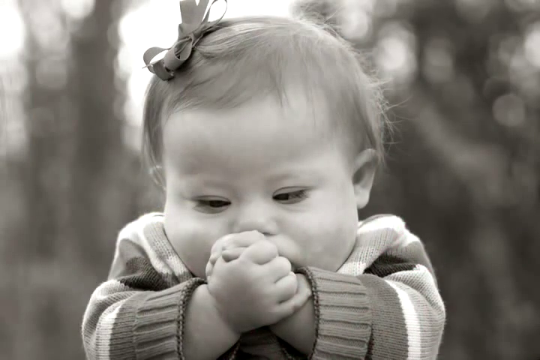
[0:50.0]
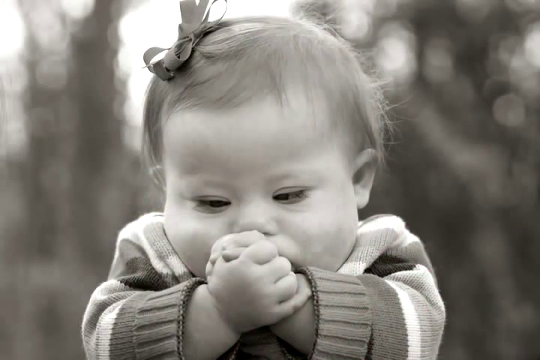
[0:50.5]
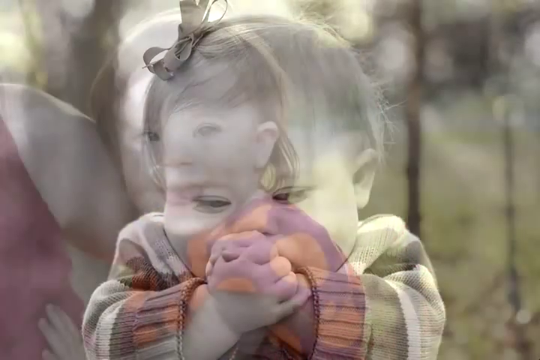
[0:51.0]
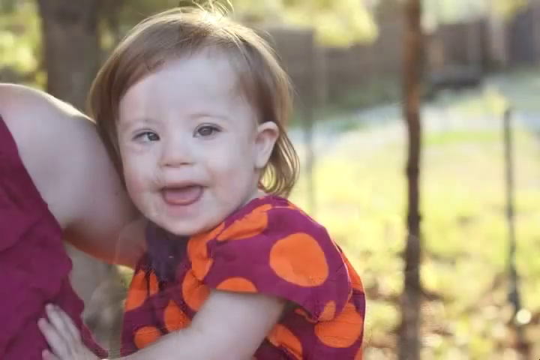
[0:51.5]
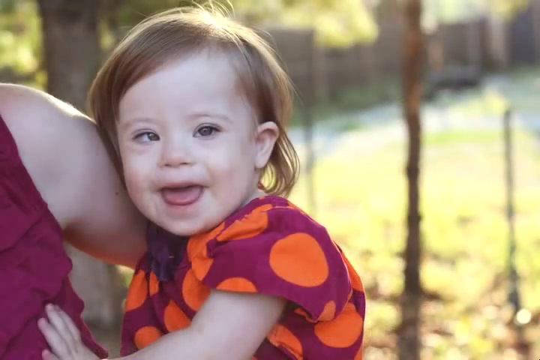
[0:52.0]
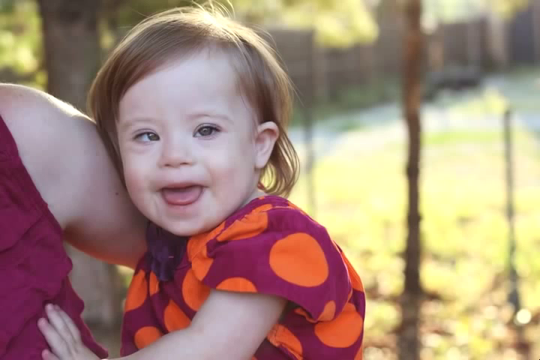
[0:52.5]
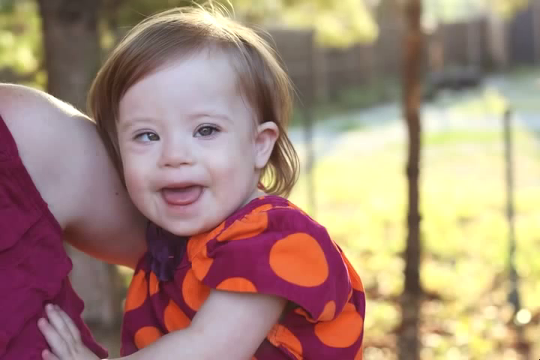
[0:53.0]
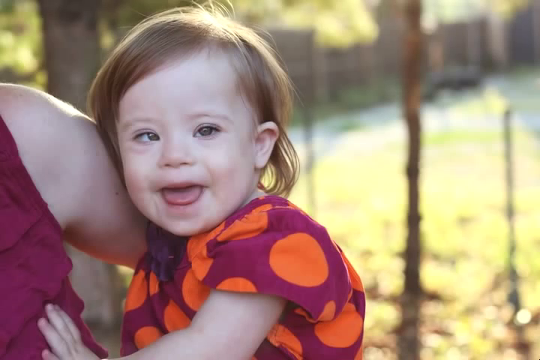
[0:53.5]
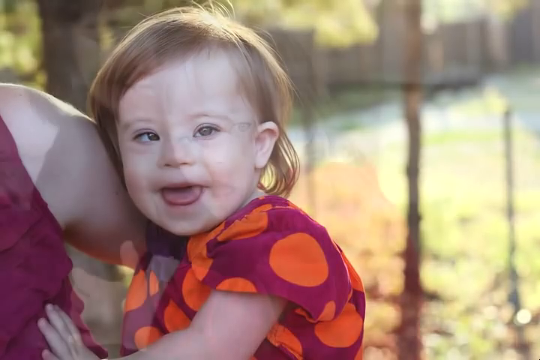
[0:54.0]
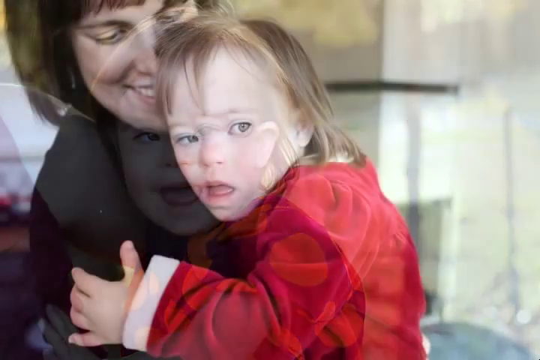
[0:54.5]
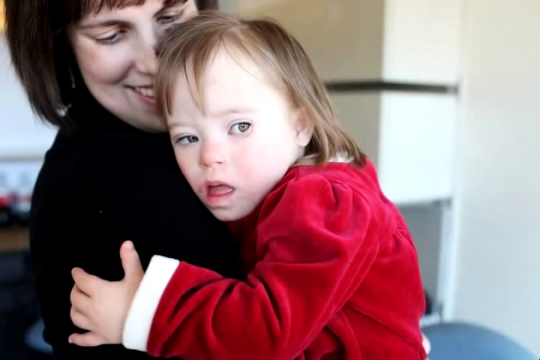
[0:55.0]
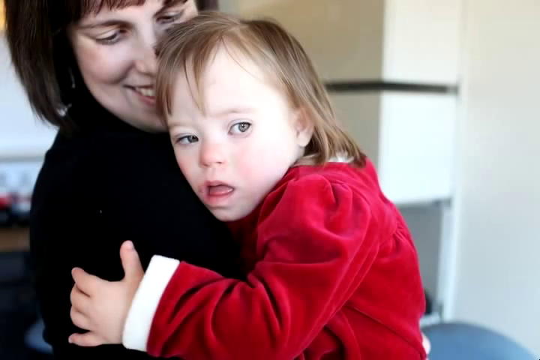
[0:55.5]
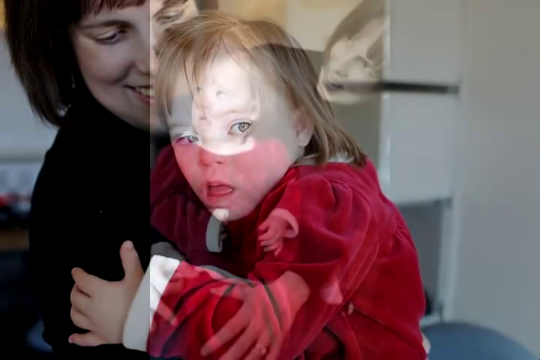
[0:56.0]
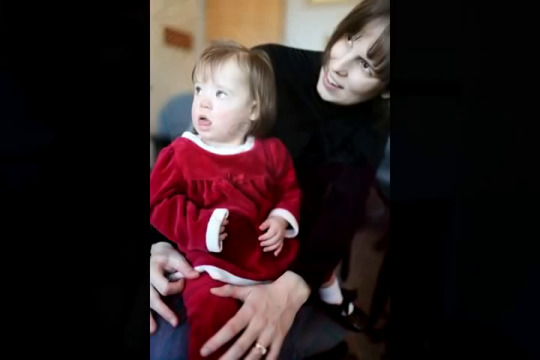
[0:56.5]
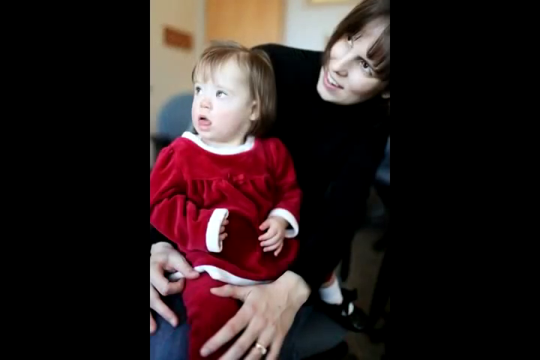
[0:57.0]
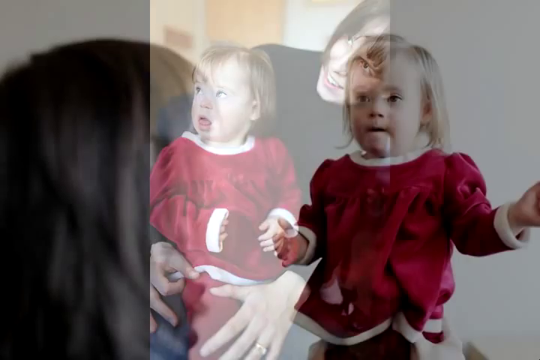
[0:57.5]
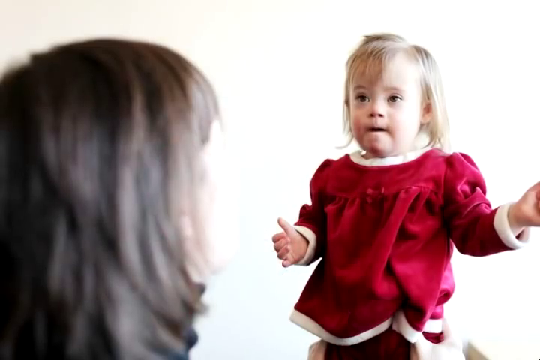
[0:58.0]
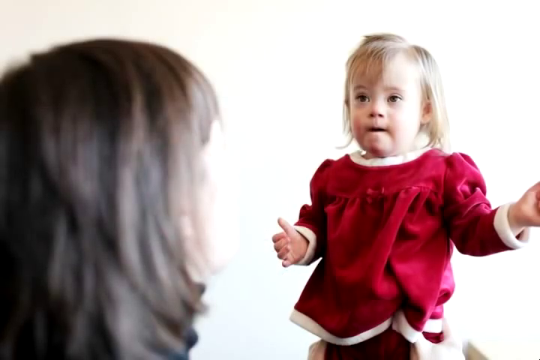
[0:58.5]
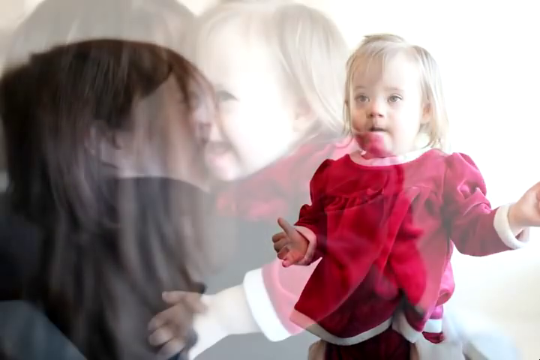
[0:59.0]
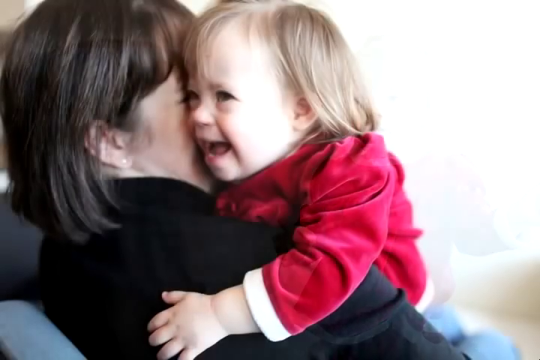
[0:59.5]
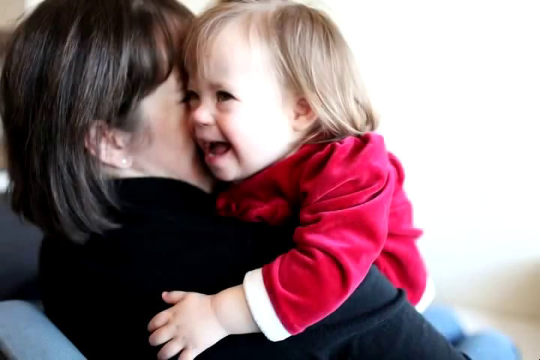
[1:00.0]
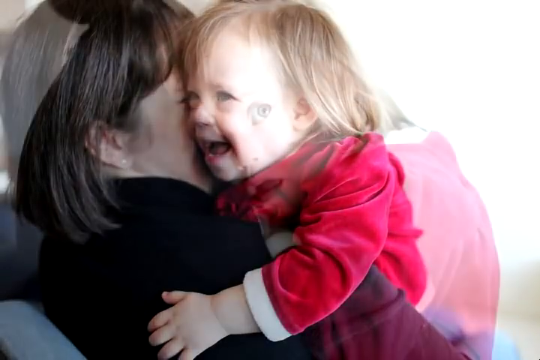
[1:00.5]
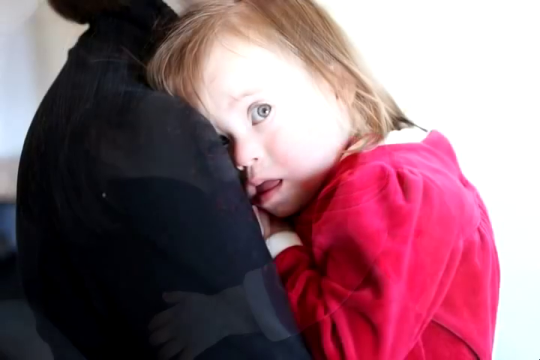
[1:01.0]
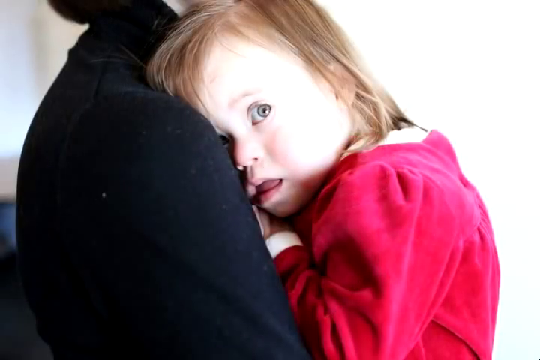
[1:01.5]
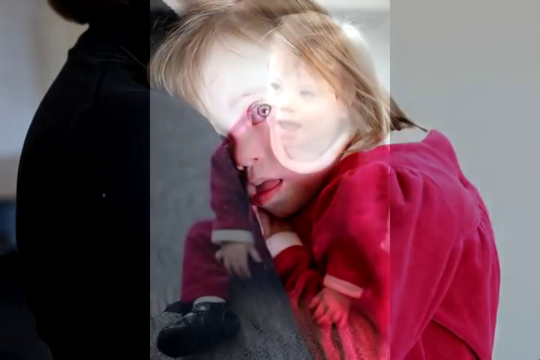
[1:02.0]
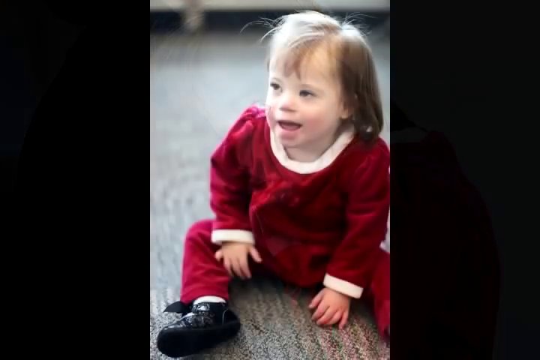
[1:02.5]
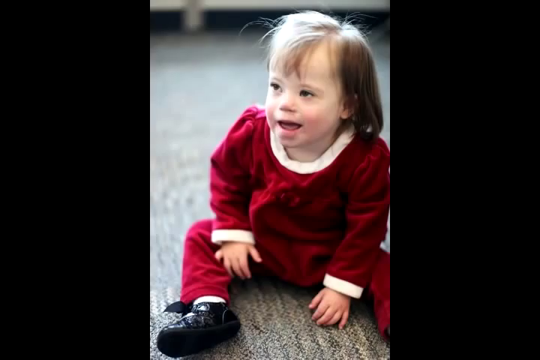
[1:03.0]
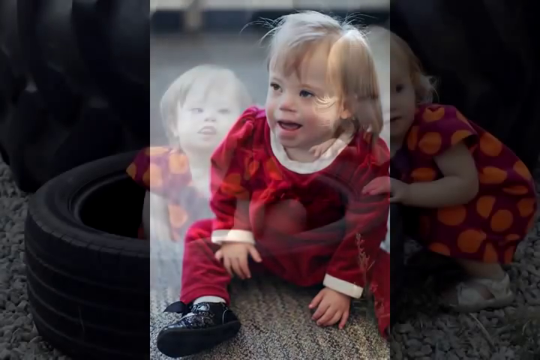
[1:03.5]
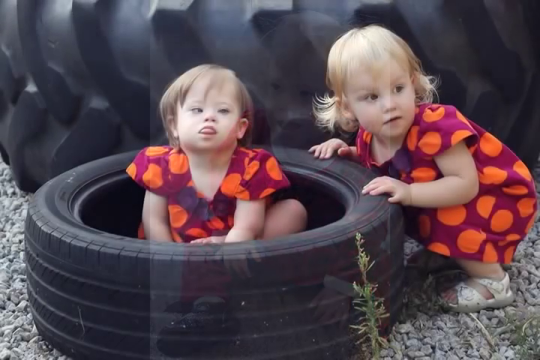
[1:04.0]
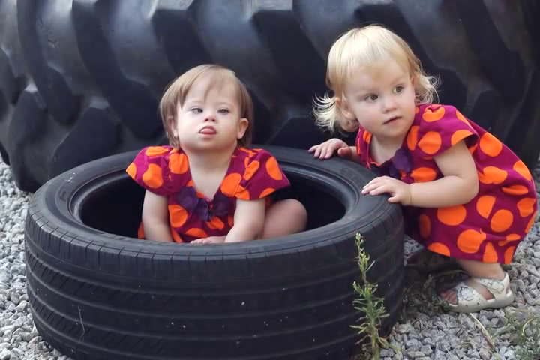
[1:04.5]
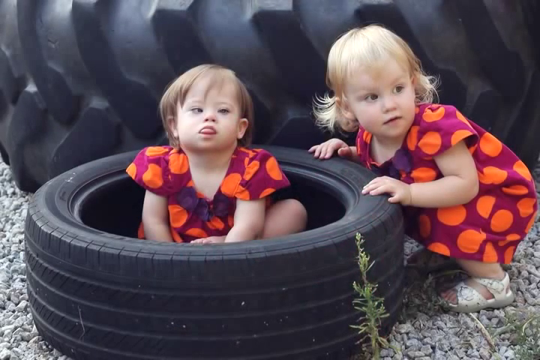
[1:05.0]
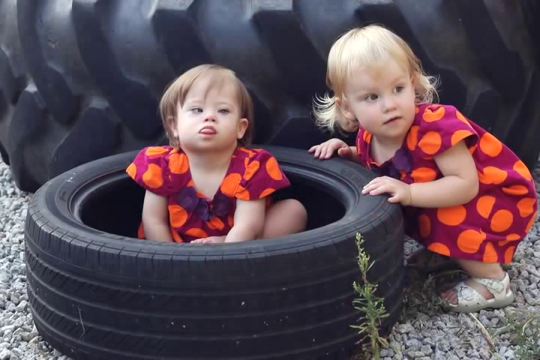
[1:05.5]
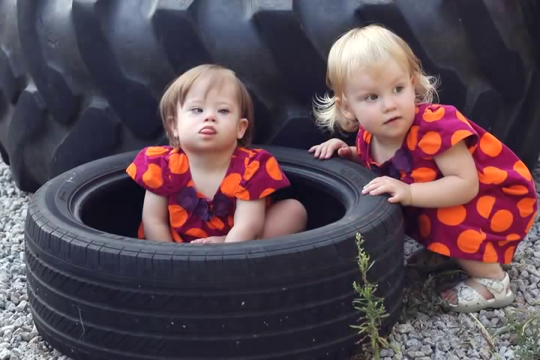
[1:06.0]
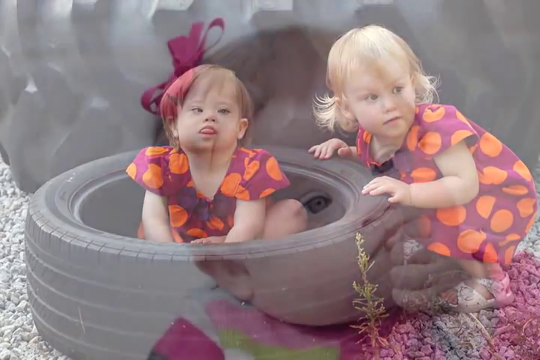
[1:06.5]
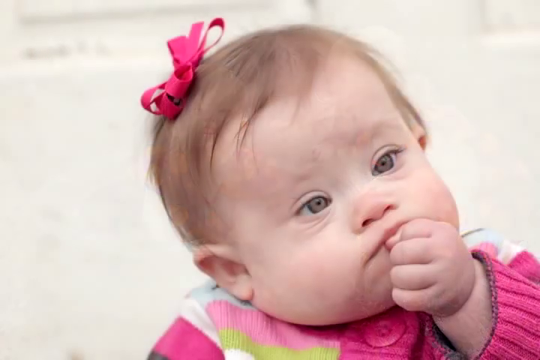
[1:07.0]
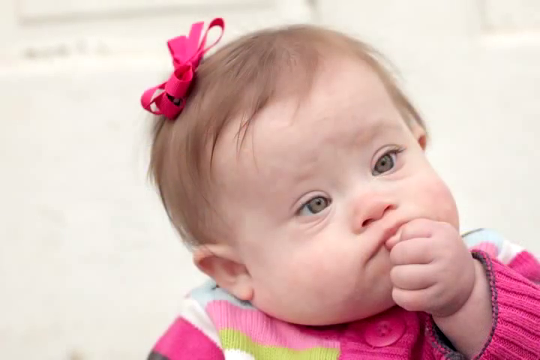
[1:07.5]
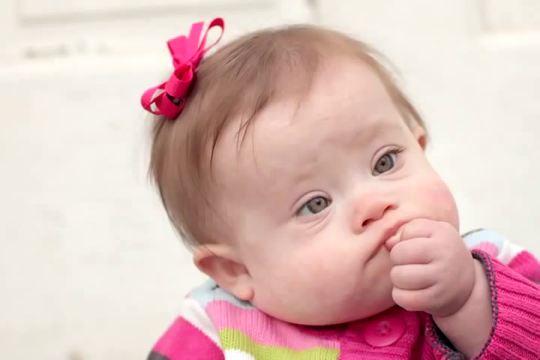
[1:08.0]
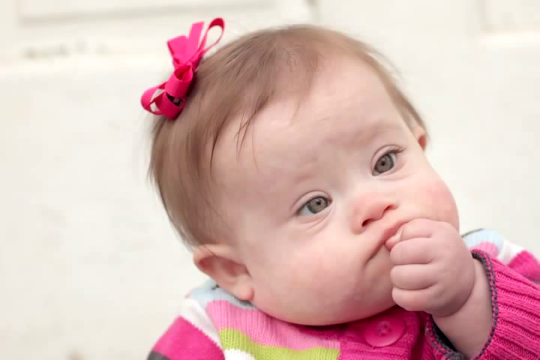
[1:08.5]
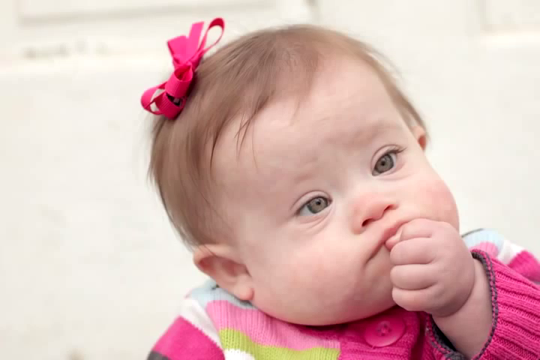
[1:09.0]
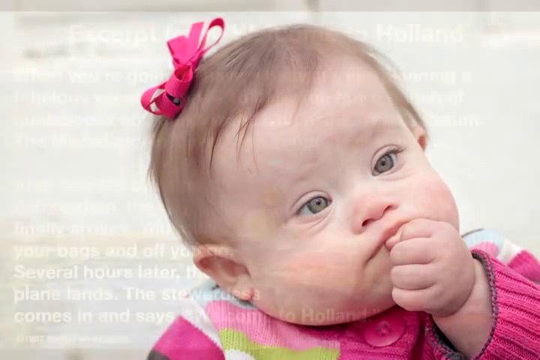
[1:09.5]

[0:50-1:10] A black and white photo shows Nora with her fists in front of her, her hands grasping each other, looking down at her fists, with a bow in her hair. A color photo follows of Nora in a shirt with big orange polka dots; part of an arm and part of a top or dress are visible, so it looks like her mom may be holding her. Next comes a picture of her mom holding her, and another of the mom with Nora in a red dress with a white collar and white trim around the sleeves. A couple more pictures with the same red dress show Nora's mom playing with Nora and hugging her, and Nora cozied up to her mom. In another picture, Nora sits by herself in what may be a dress but looks like a red outfit of some kind. She then appears with her sister in matching dresses with large orange polka dots on what is kind of a purple background; the sister seems to have blonde hair, while Nora's hair is a little more brownish. A picture of Nora alone shows a pink bow in her hair and her fist up by her mouth. Then a paragraph of writing appears, including the word "excerpt."